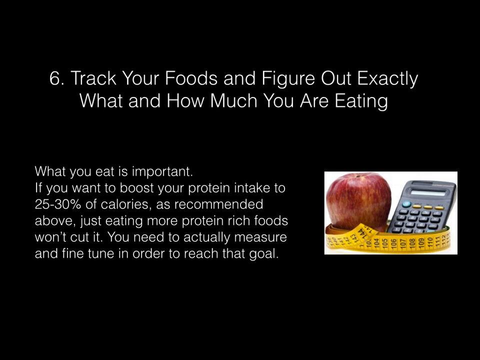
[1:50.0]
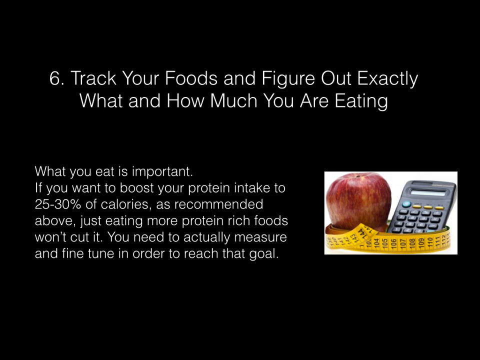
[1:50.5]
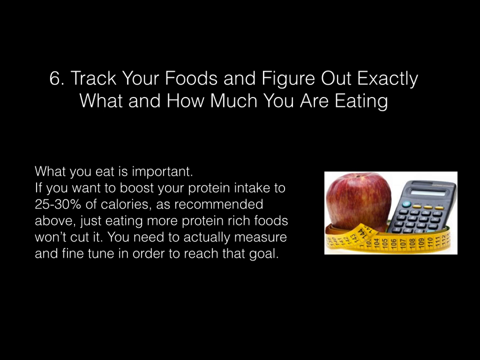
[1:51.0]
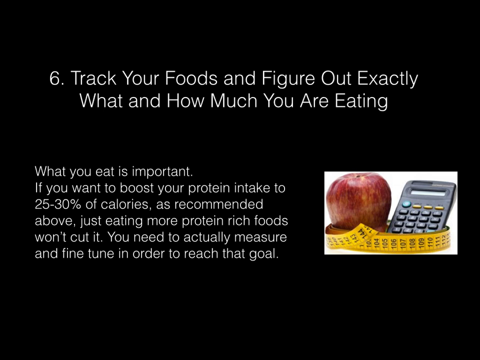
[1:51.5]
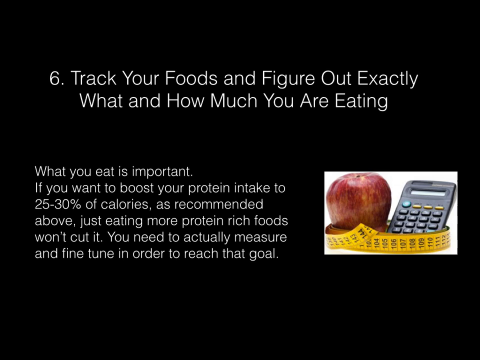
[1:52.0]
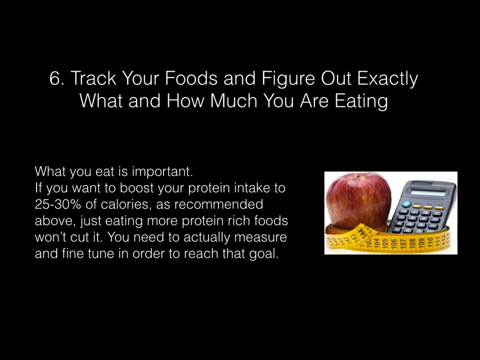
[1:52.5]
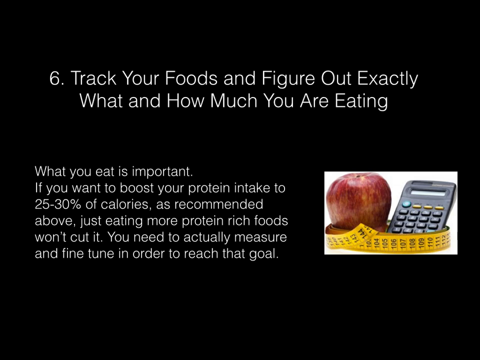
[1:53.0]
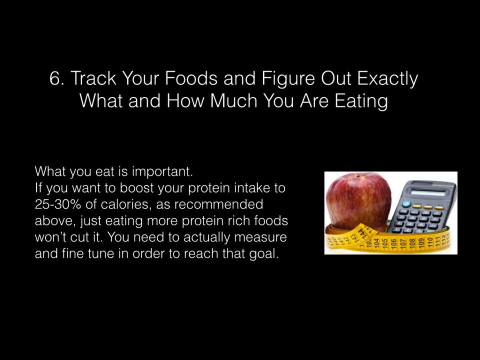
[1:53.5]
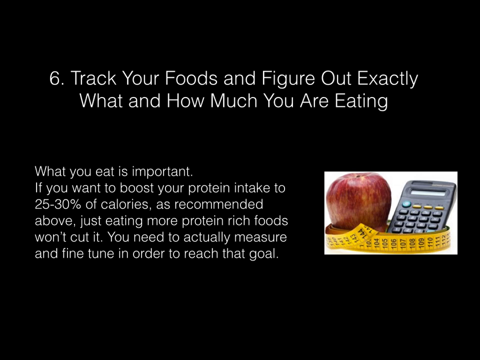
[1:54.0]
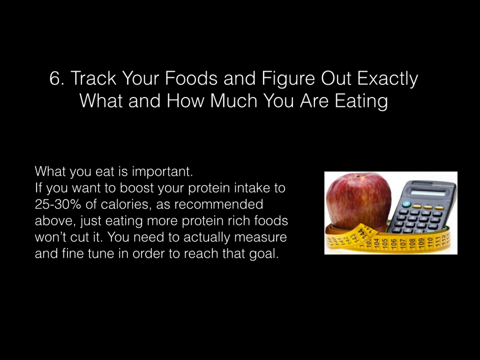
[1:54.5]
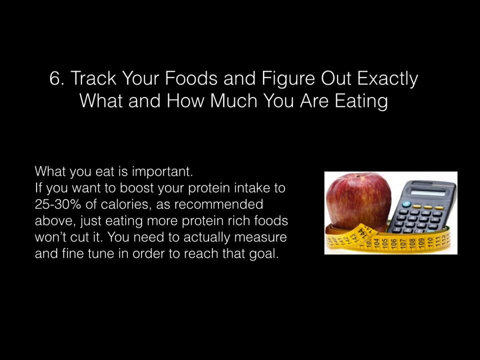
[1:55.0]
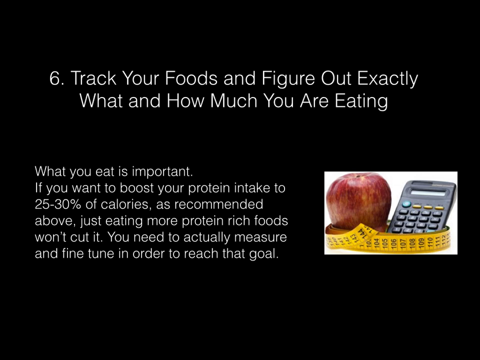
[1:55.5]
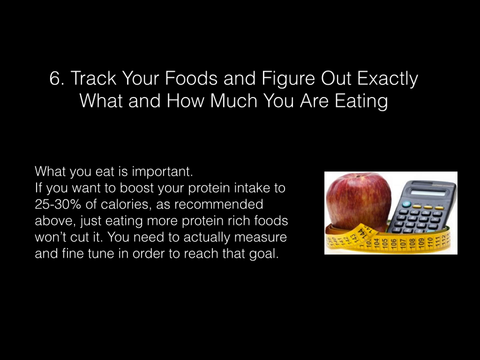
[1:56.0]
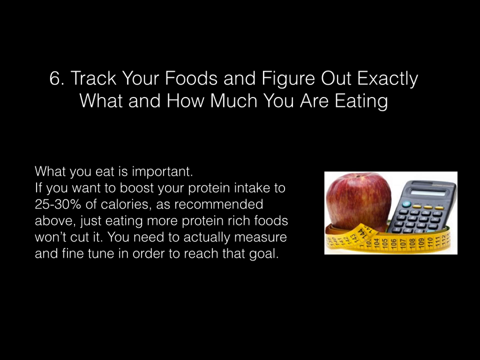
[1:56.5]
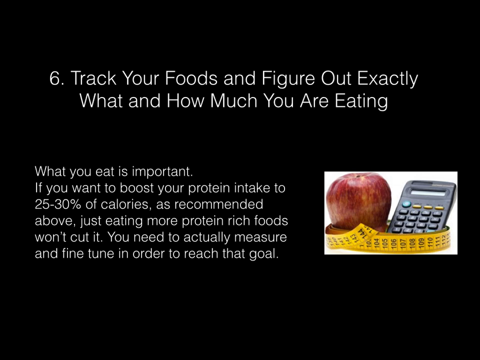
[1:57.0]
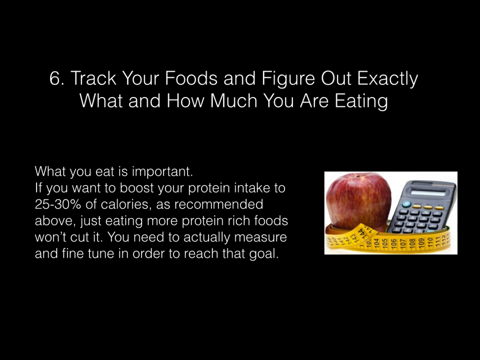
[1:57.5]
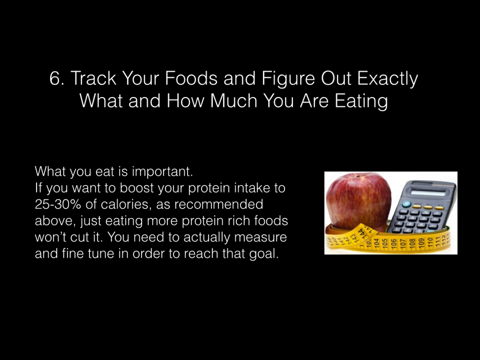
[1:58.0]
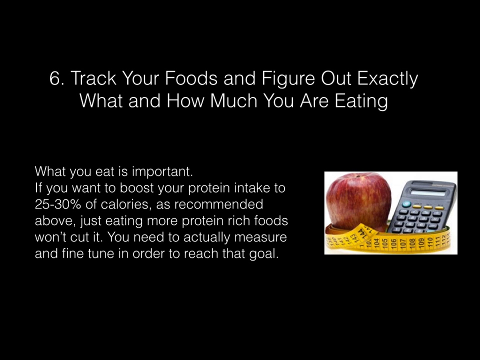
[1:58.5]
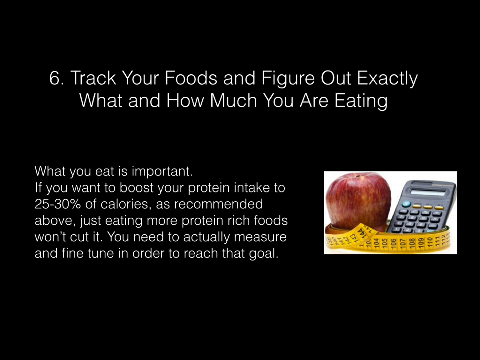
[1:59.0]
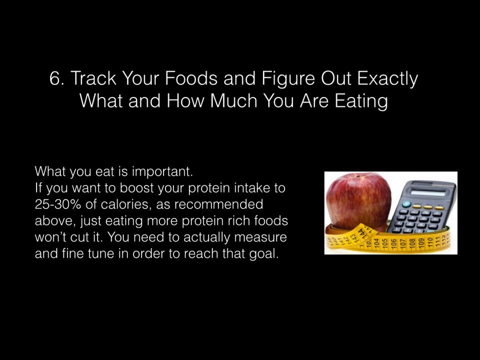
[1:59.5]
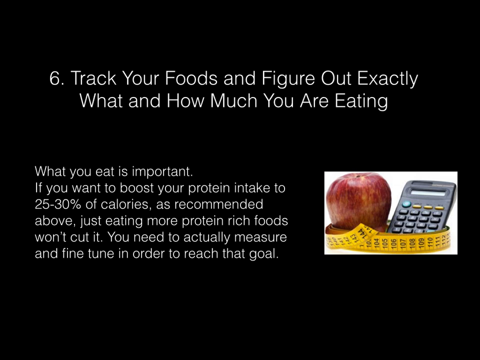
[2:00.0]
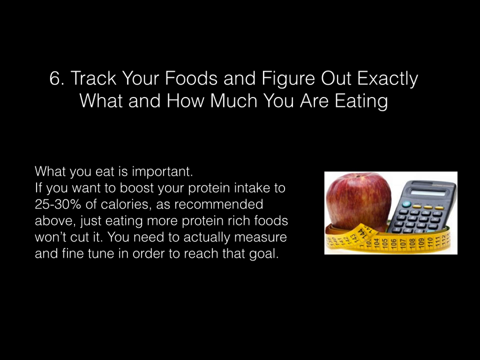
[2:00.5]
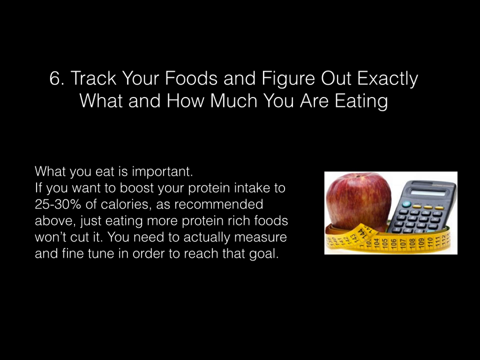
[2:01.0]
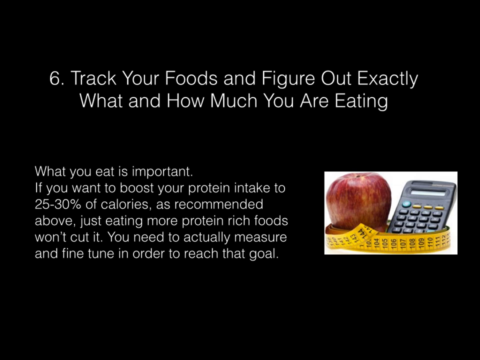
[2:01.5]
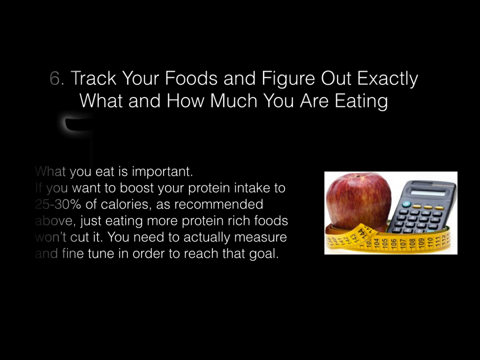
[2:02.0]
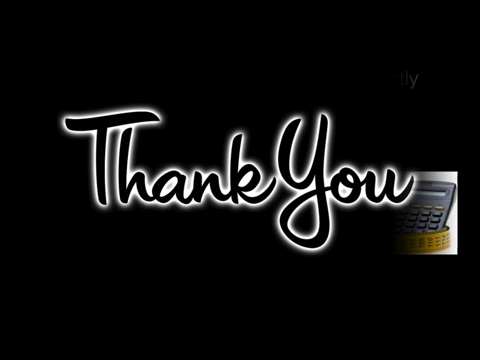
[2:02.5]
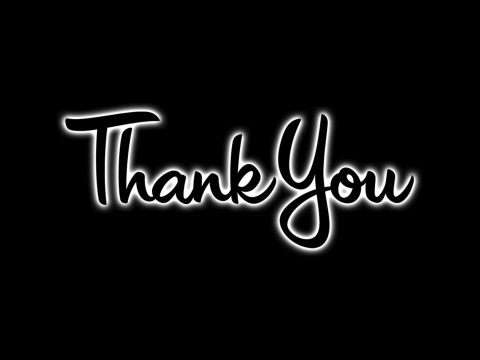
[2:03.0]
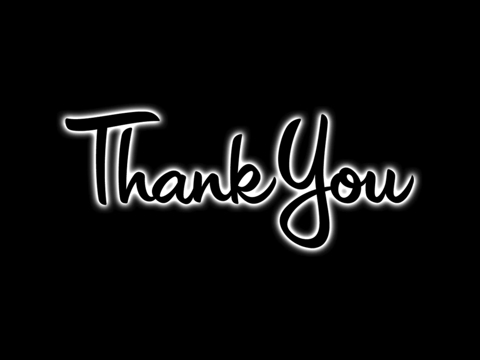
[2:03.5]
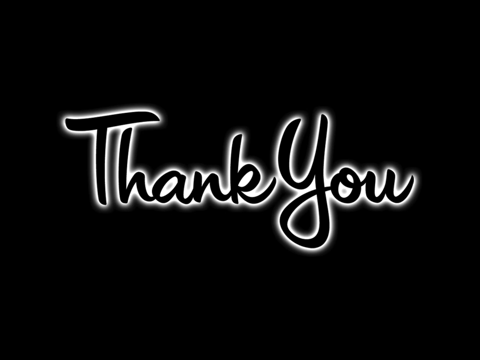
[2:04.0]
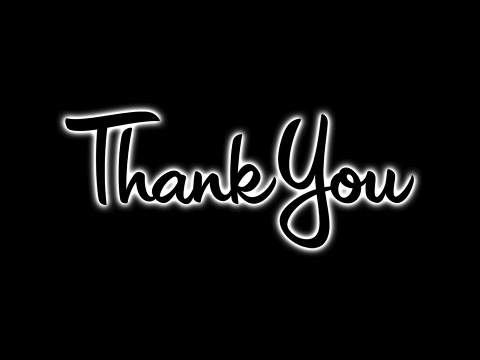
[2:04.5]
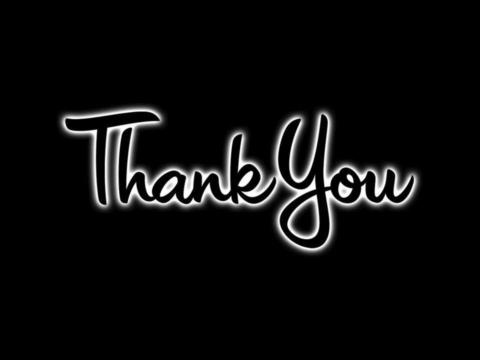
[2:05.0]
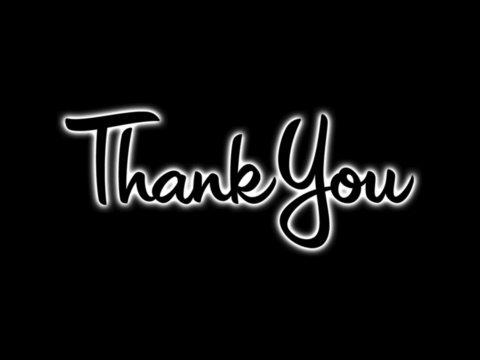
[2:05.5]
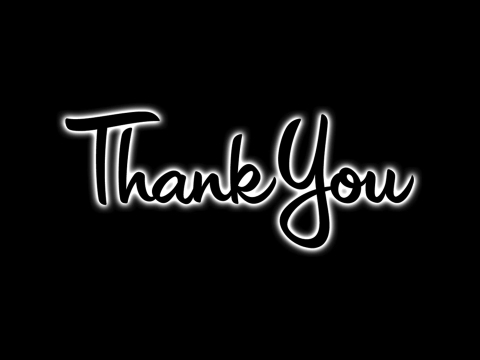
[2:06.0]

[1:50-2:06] This health and fitness video shows slide six, titled "track your foods and figure out exactly what and how much you were eating." The lower left reads "what you eat is important. If you want to boost your protein intake to 25 to 30 percent of calories as recommended above just eating more protein rich foods won't cut it. You need to actually measure and fine tune in order to reach that goal." On the right is a picture of an apple and a calculator inside the circle formed by a measuring tape. The video ends with the words "thank you" in cursive, in black letters with a white border against a black background. All of the slides in the video have a black background and white font, with little clipart pictures alongside the text.